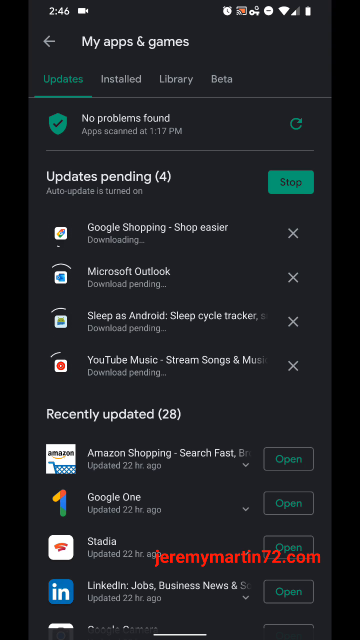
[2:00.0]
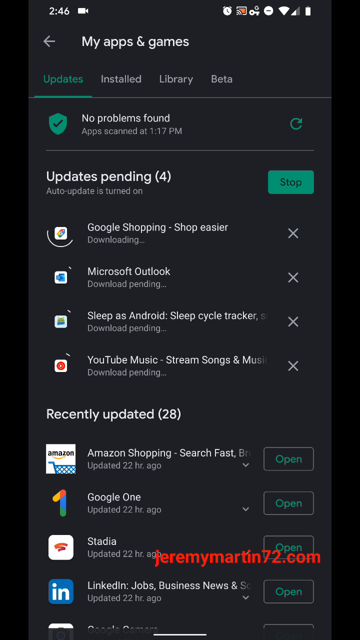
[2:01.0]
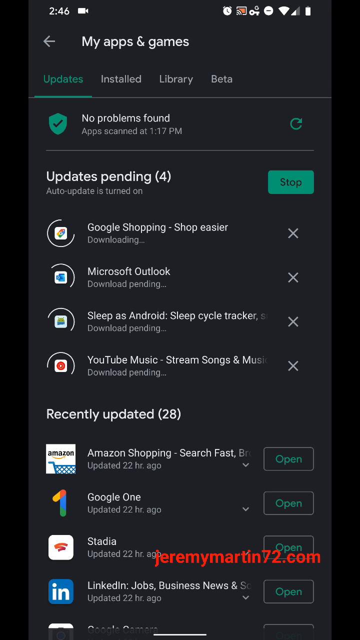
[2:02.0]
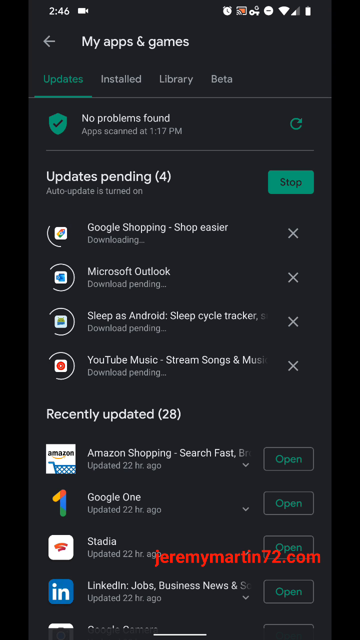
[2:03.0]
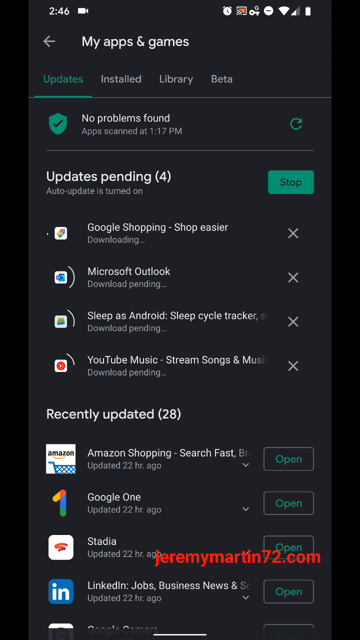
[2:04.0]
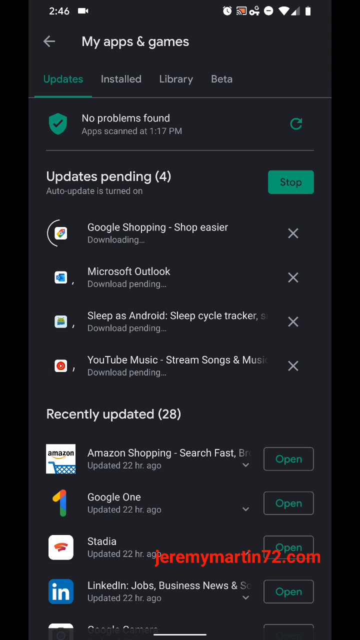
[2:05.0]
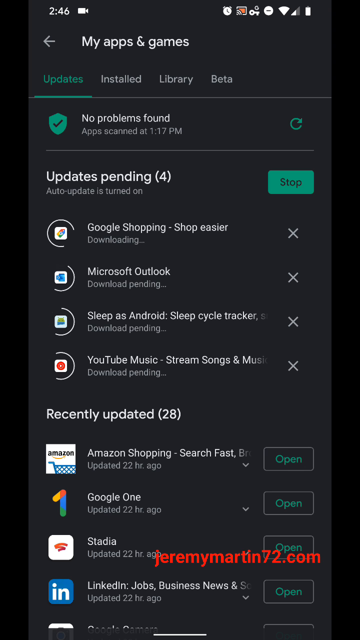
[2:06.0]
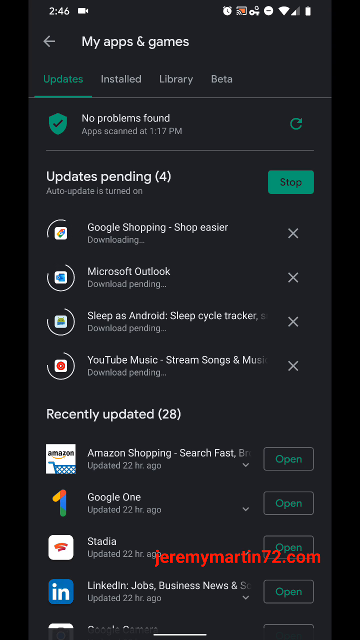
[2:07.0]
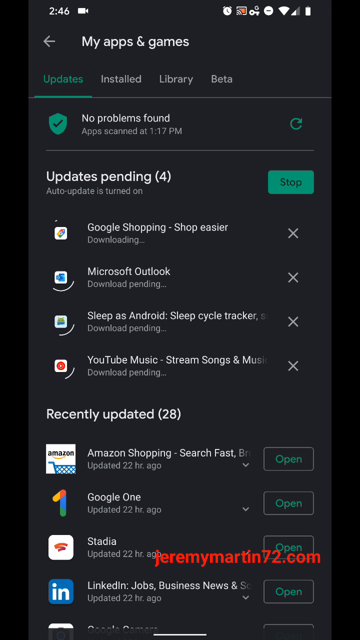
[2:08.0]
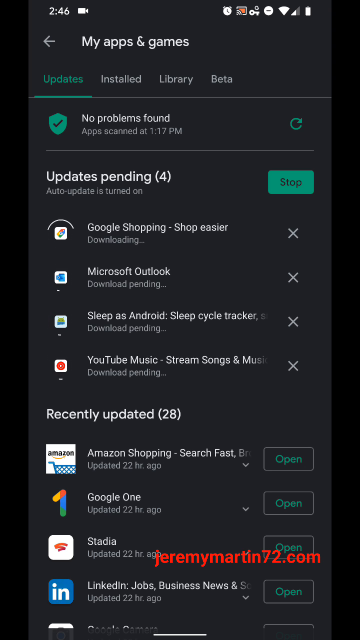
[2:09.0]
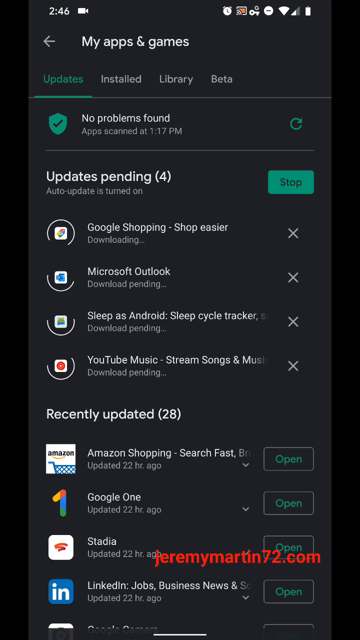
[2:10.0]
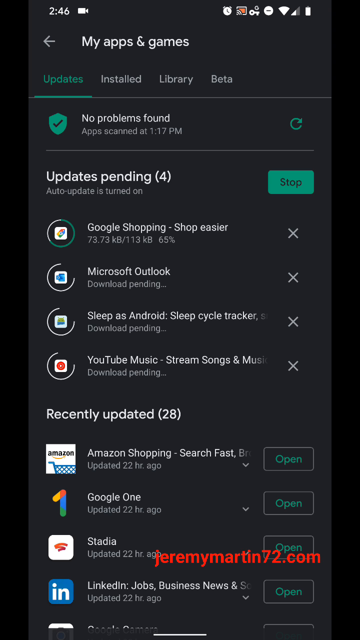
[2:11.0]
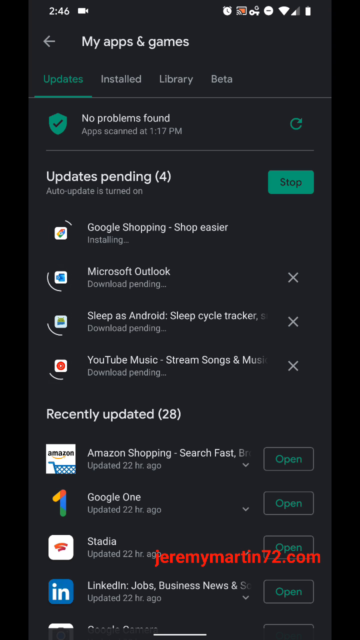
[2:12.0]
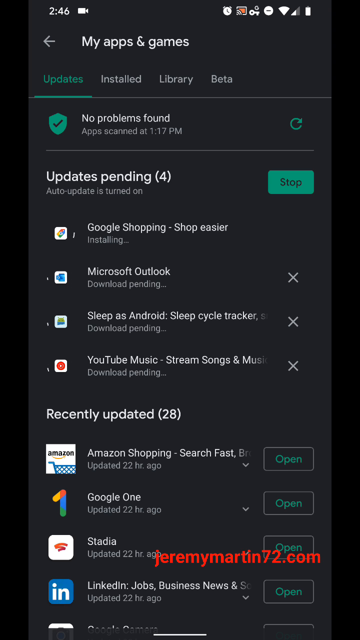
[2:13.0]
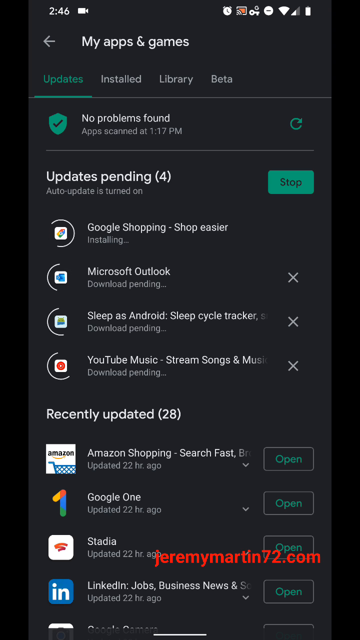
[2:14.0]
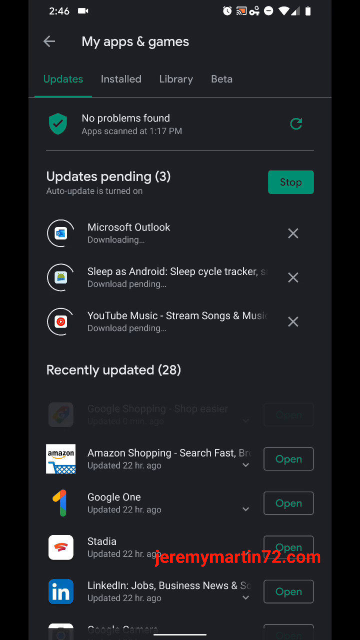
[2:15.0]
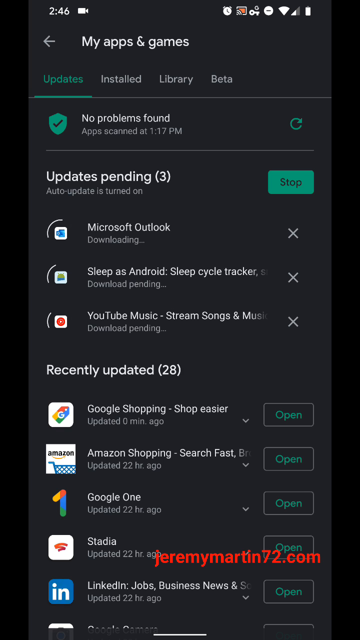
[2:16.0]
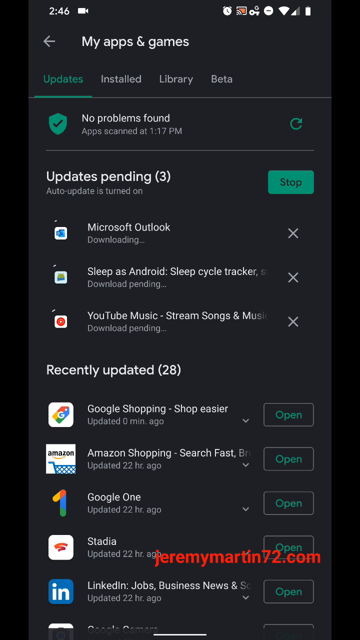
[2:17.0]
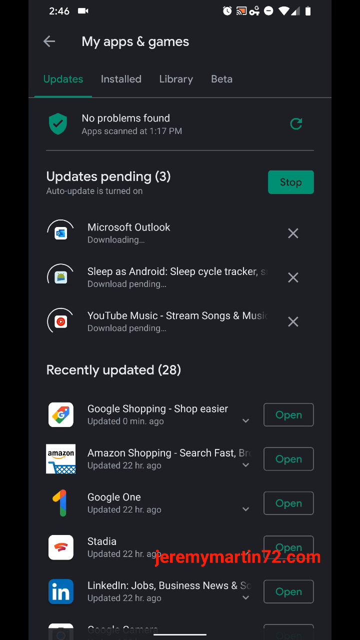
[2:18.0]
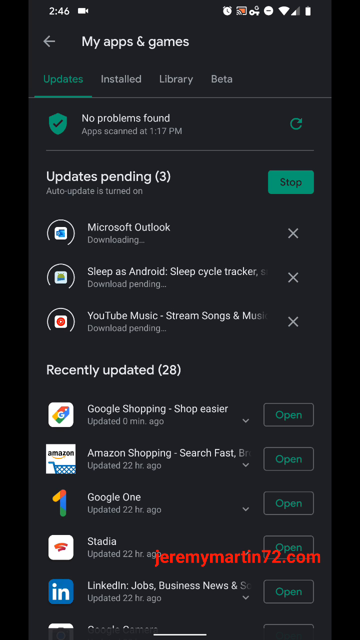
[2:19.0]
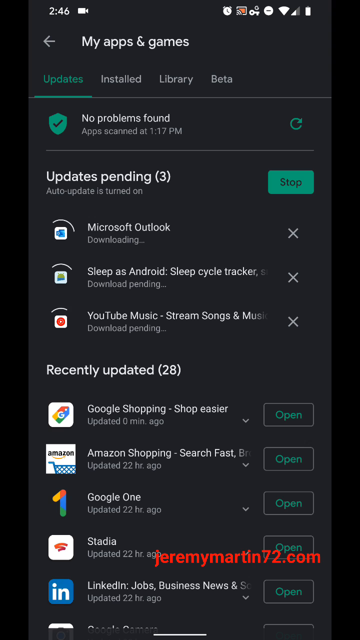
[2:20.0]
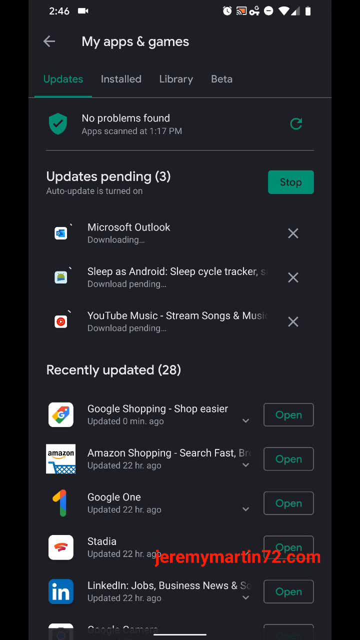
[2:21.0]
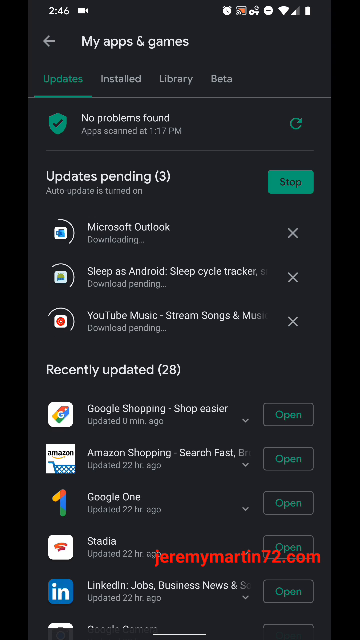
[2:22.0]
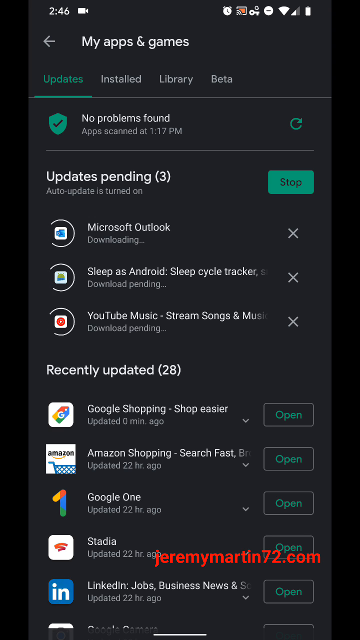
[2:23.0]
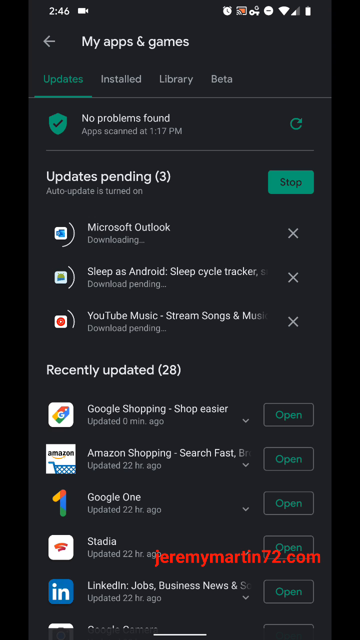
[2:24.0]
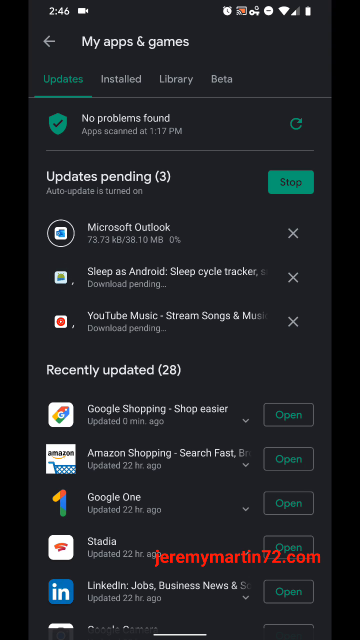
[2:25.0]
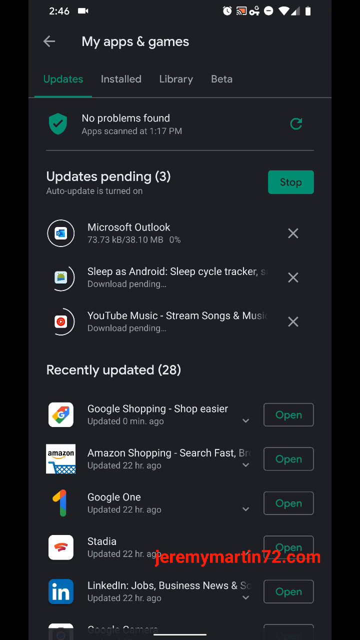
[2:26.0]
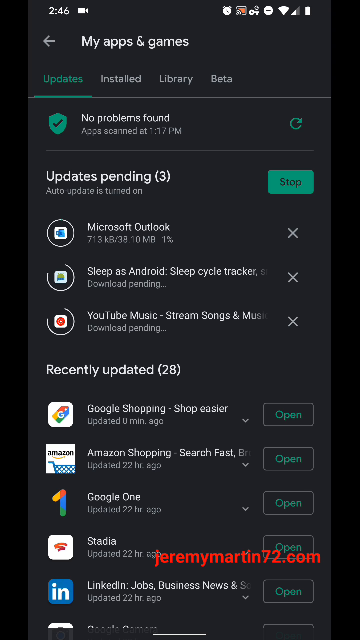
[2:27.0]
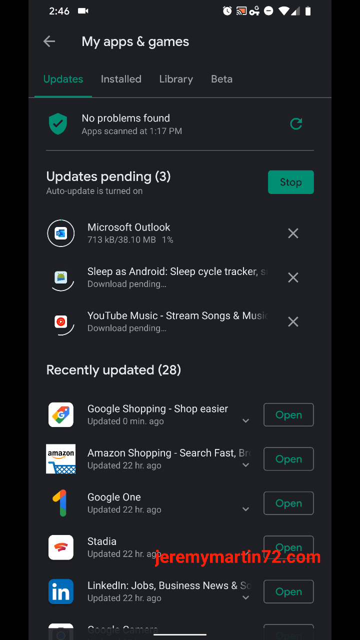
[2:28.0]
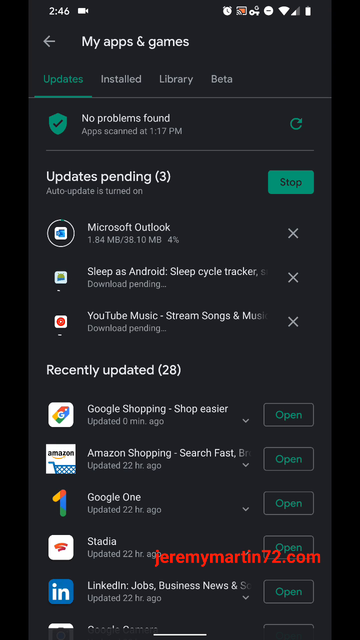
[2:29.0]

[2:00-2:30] In the Google Play Store, the user is on My apps and games, shown at the top of the screen with an arrow pointing left to go back. There are four tabs at the top: updates is highlighted in green, and the other tabs, installed, library and beta, are white. Underneath, "no problems found" appears, apparently from a system or app check, with a green refresh button to the right of it. Below, four updates are pending, with a green button to the right of the updates pending text to stop the updates; all four are in the process of updating. At the bottom, a recently updated section shows 28 apps recently updated on the device. The screen stays for several seconds. There is some activity on the Google Shopping app, and once it finishes it is removed from the updates pending section and moves down to the recently updated section.